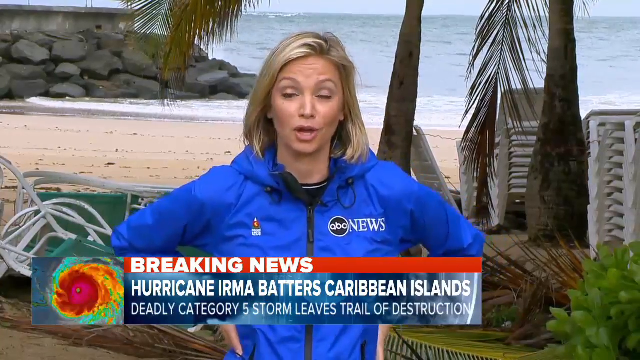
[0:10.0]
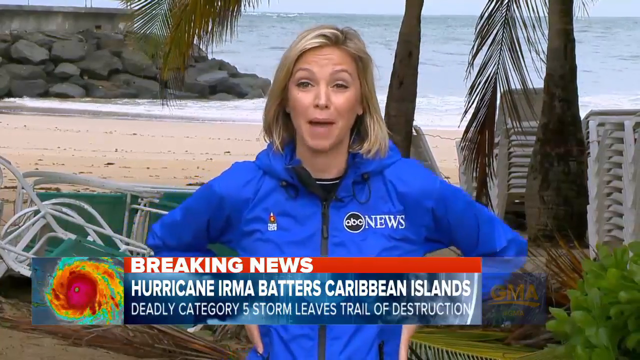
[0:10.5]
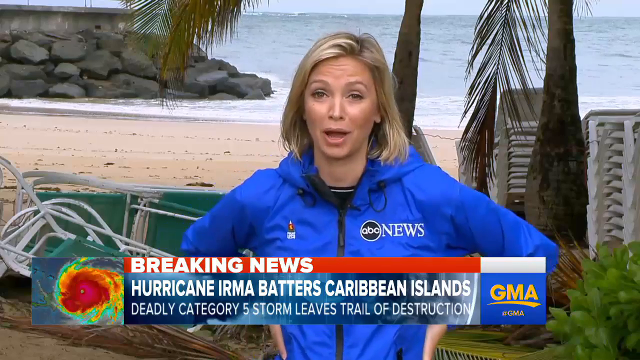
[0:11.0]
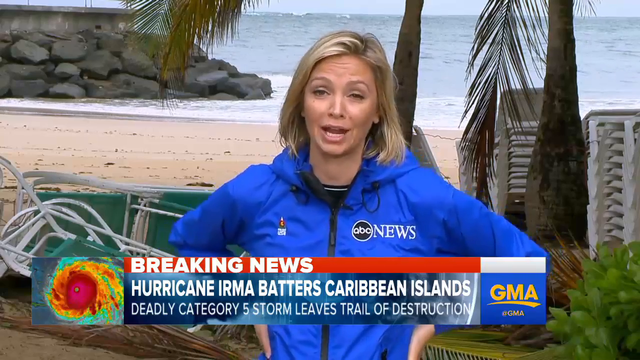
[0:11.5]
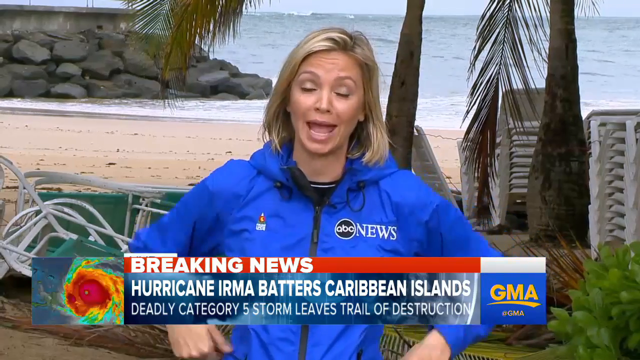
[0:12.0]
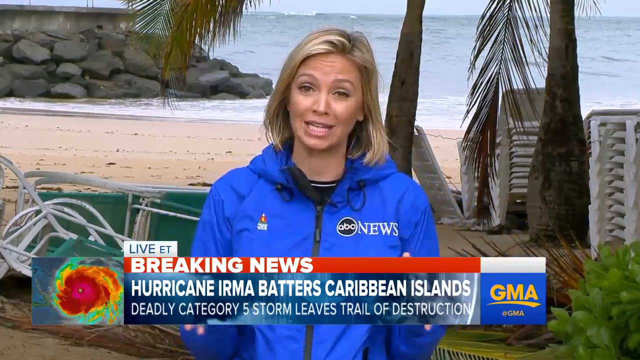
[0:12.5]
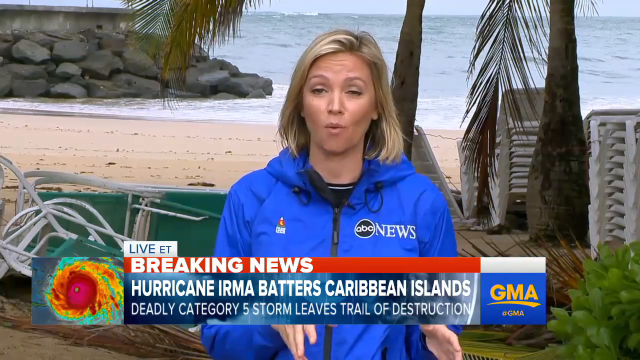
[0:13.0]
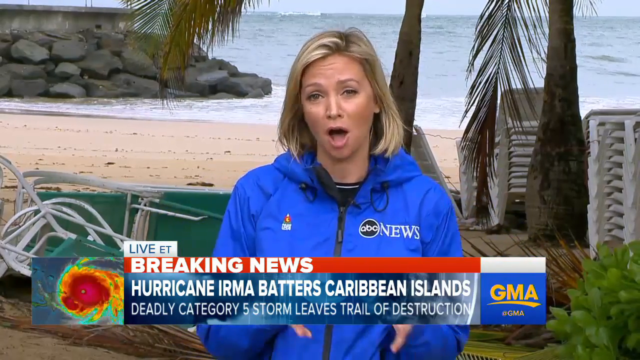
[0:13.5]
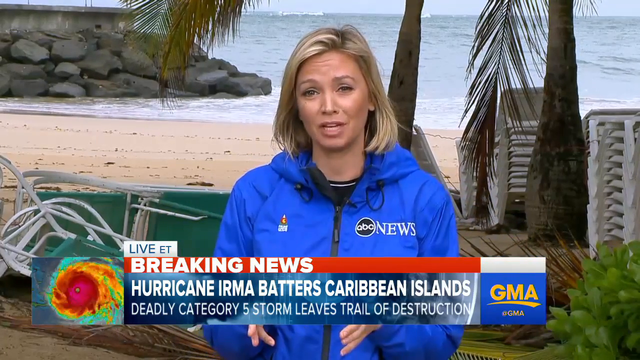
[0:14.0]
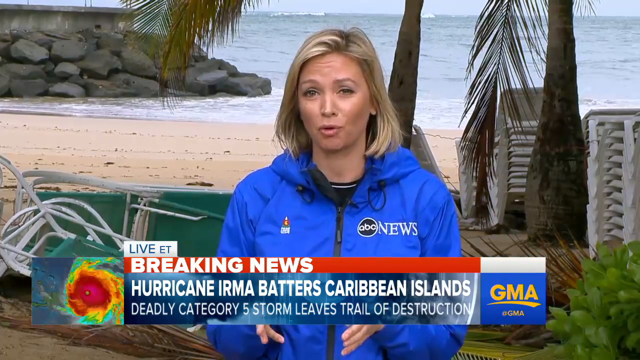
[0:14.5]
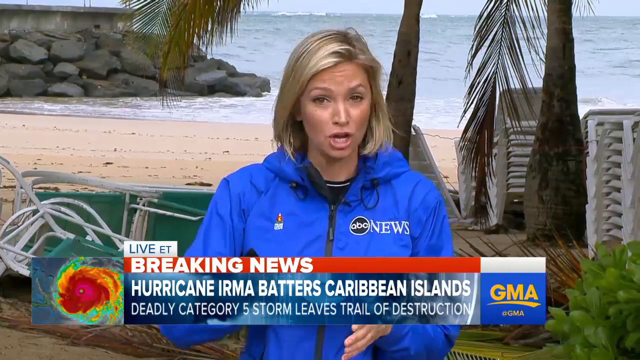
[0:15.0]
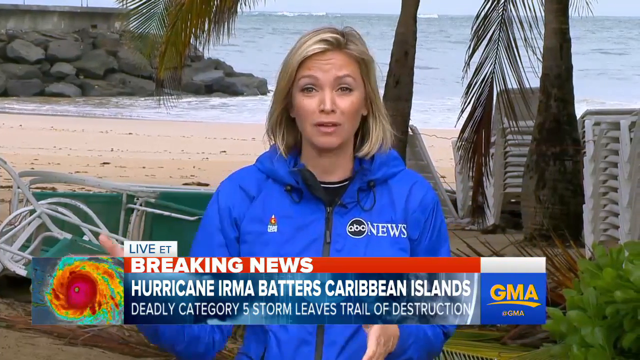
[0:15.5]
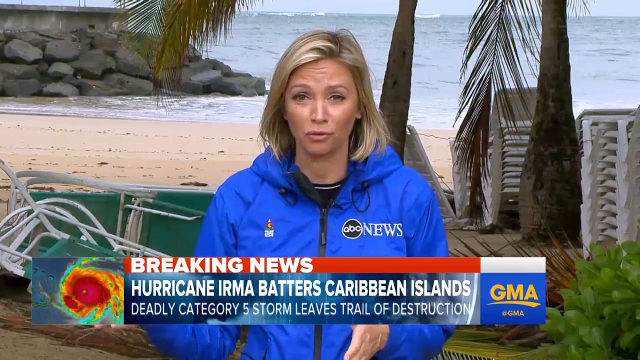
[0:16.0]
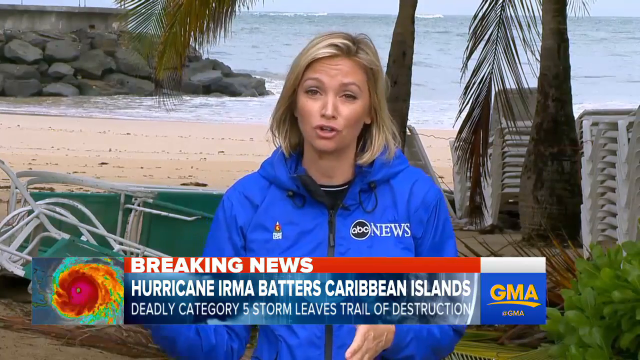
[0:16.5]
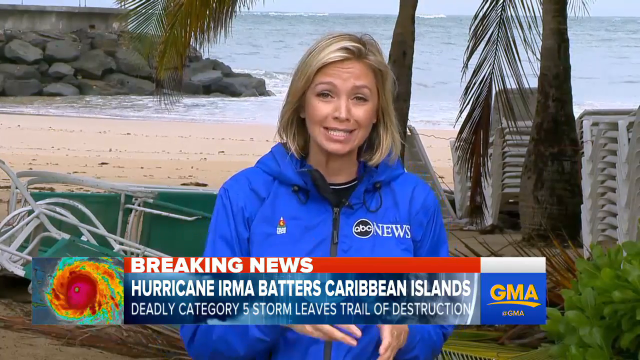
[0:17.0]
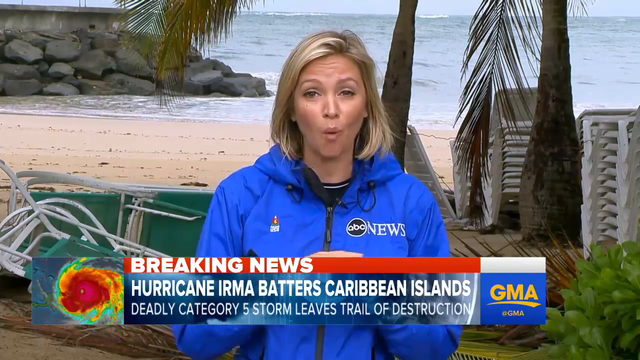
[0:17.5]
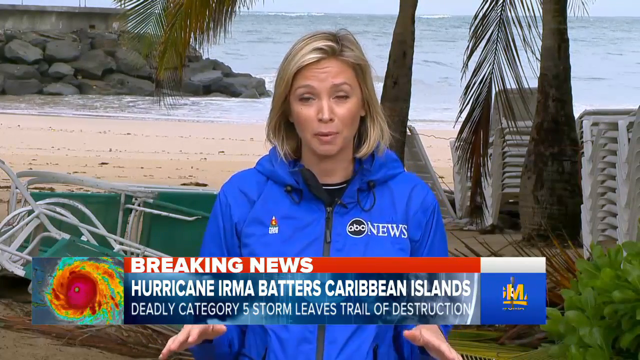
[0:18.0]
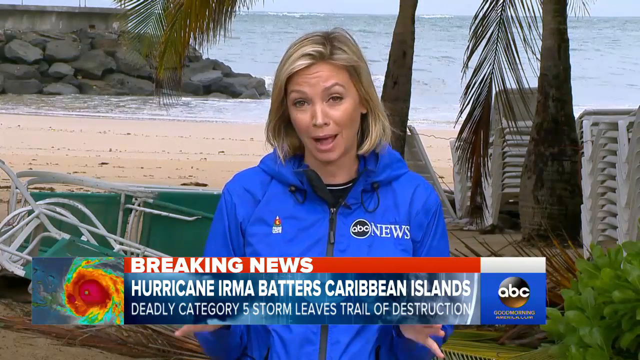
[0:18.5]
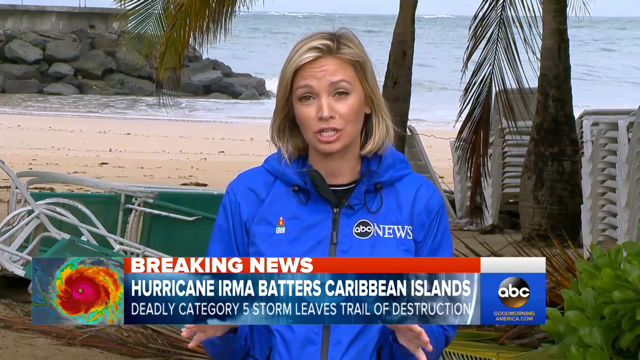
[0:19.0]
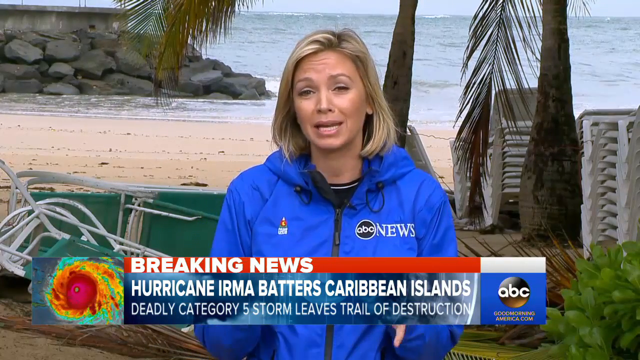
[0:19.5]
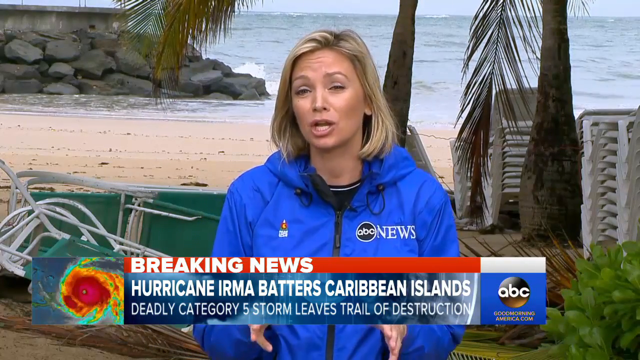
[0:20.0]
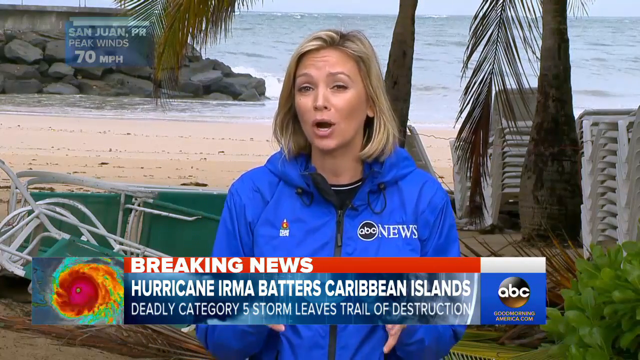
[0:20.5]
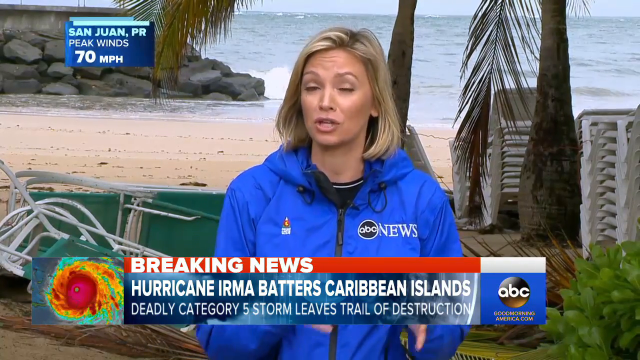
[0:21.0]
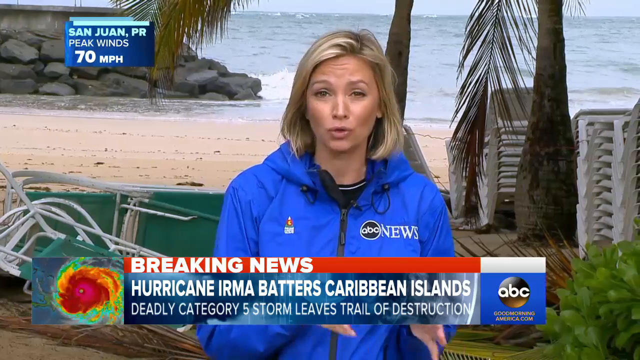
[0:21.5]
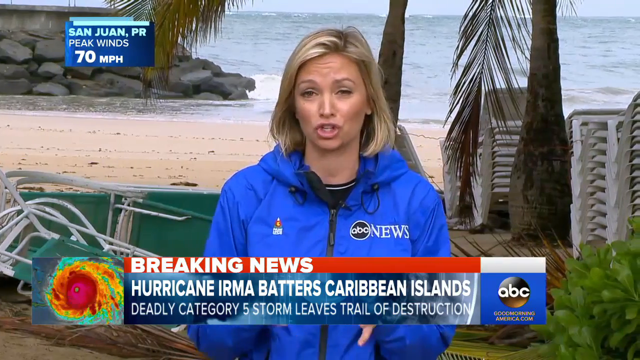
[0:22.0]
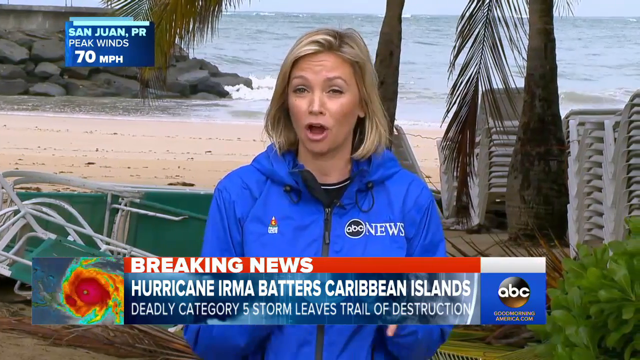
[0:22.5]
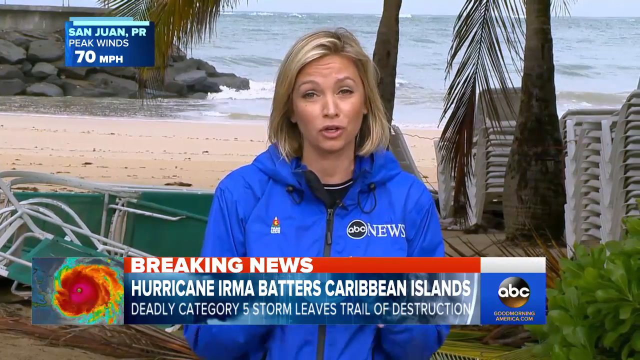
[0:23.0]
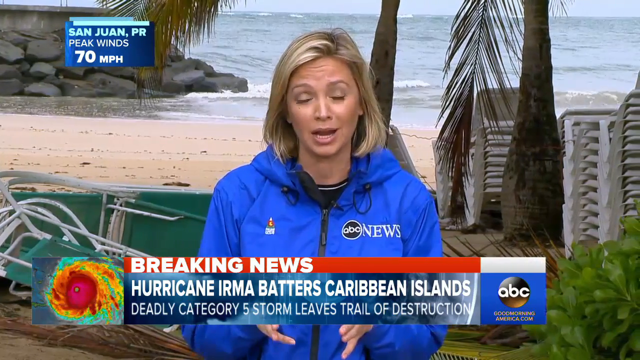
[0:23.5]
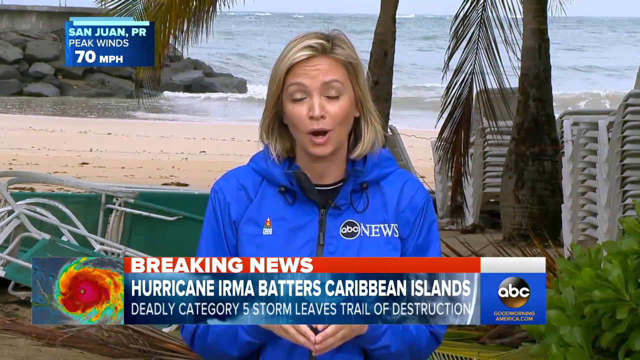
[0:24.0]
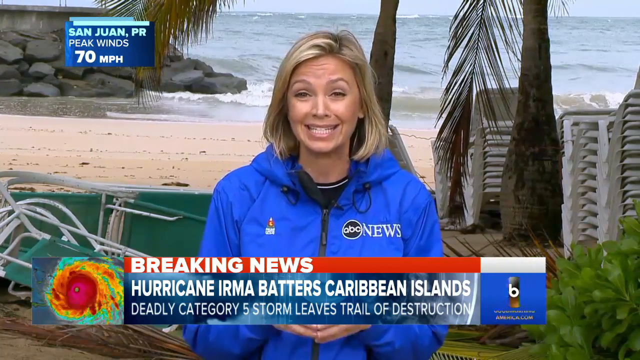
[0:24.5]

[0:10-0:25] A woman who appears to be a newscaster is on location at a Caribbean island, possibly San Juan, Puerto Rico. She wears a bright blue jacket with the words "ABC News"; the letters ABC are in a circle whose outside is white and whose inside appears to be black. The jacket's zipper is black with a black tab, and what looks like a microphone is attached to the front of the jacket. She has blonde hair with darker roots that reaches right at the base of her neck, a light, maybe greenish-blue eyeshadow on her eyelids, pronounced earth-colored blush on her cheeks, and a light rose, orangish type of lipstick. Her teeth are fairly white and appear fairly straight, and the bottoms of her earlobes are showing. She appears to be standing on the ocean sand, and in the background there are some green lounge chairs with metal bases and some stacked white chairs.